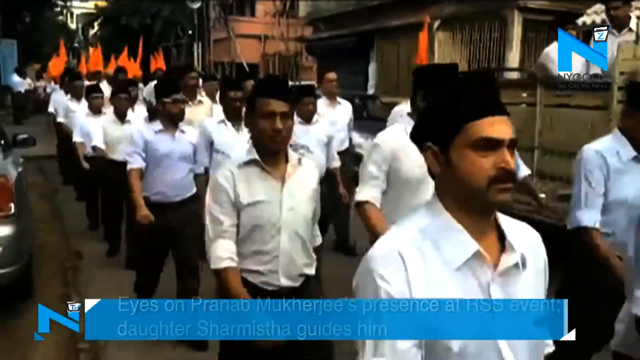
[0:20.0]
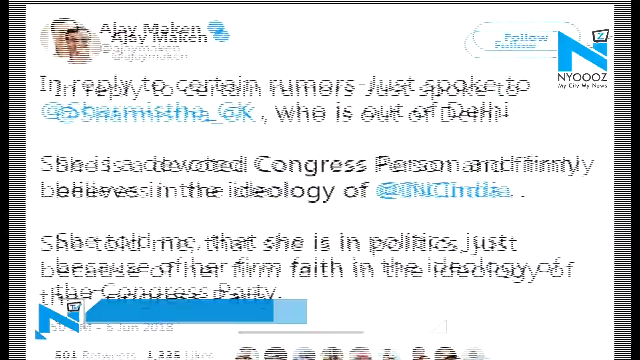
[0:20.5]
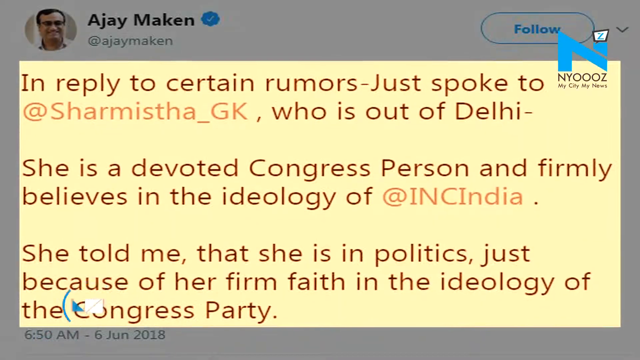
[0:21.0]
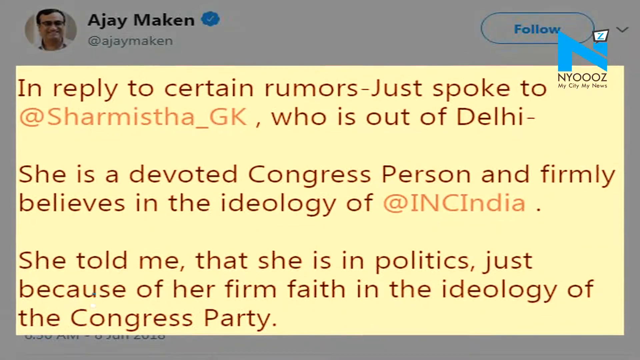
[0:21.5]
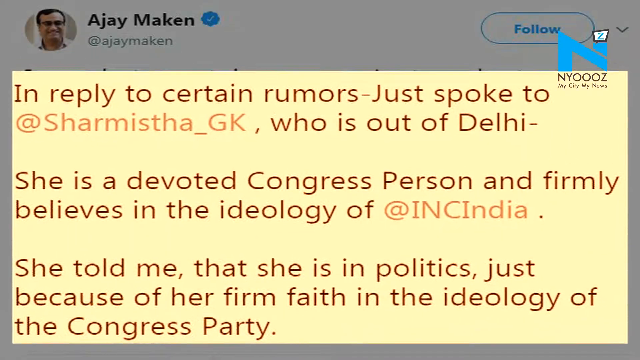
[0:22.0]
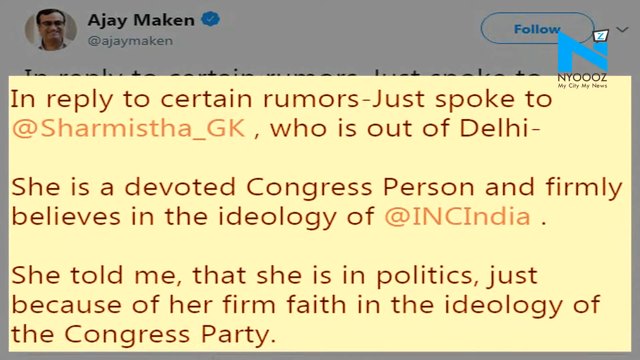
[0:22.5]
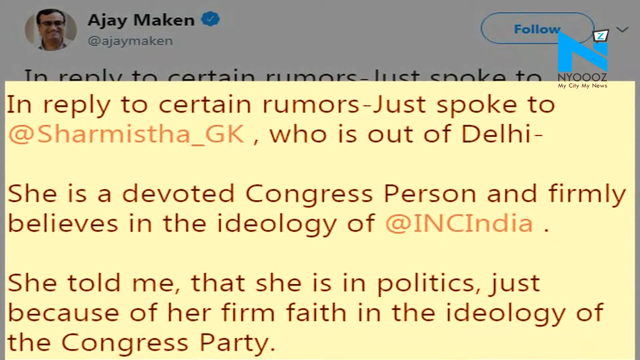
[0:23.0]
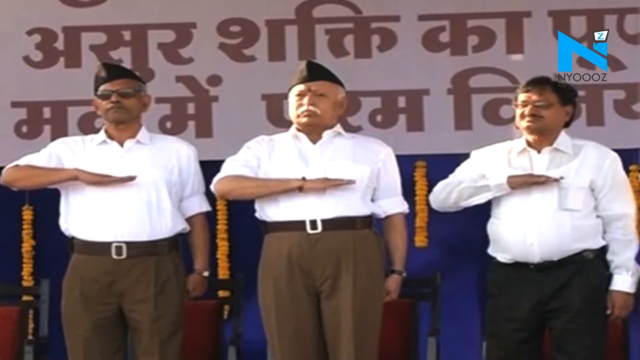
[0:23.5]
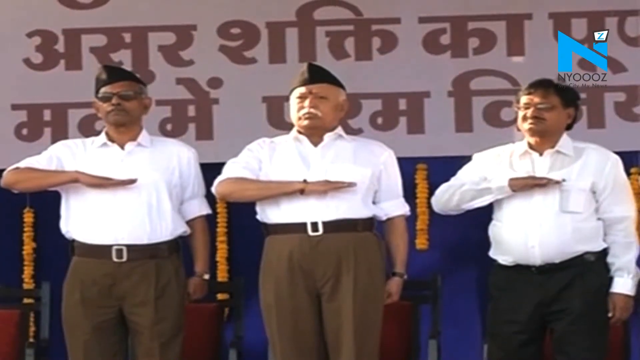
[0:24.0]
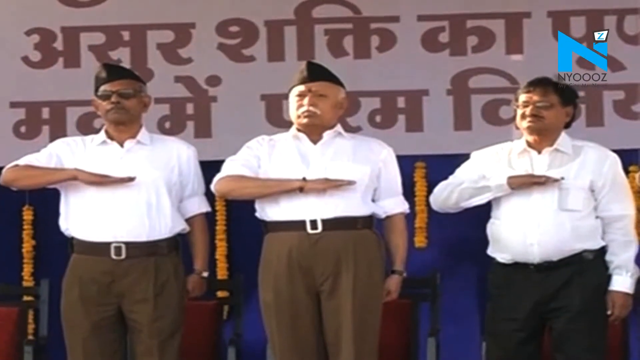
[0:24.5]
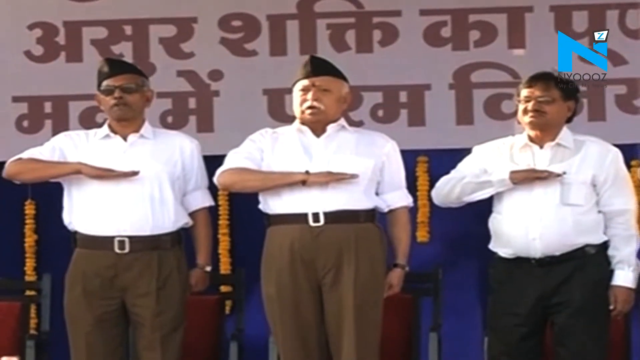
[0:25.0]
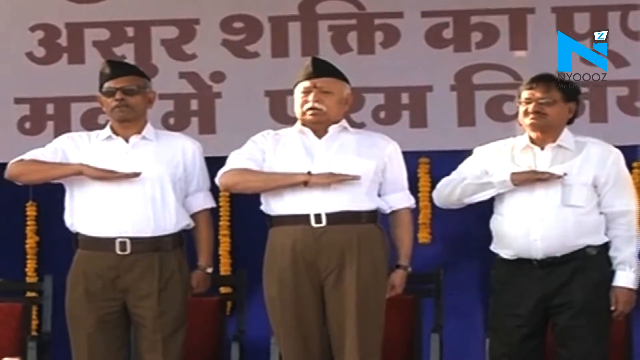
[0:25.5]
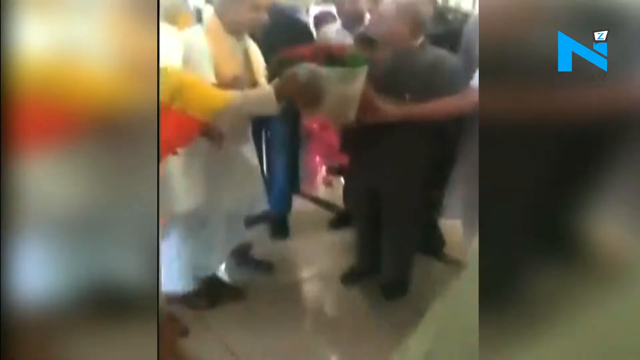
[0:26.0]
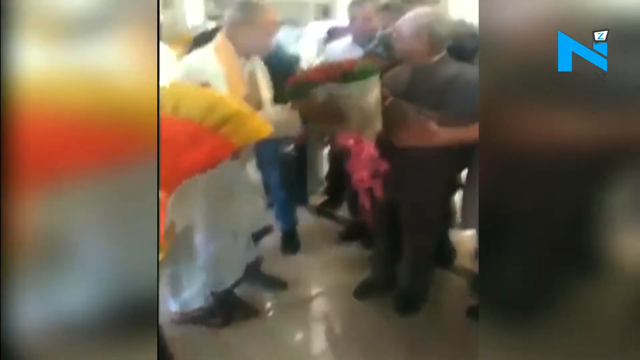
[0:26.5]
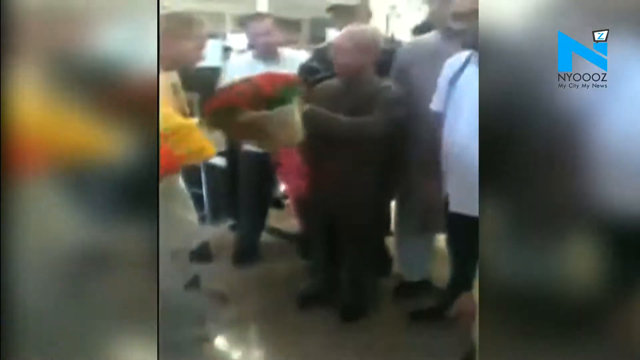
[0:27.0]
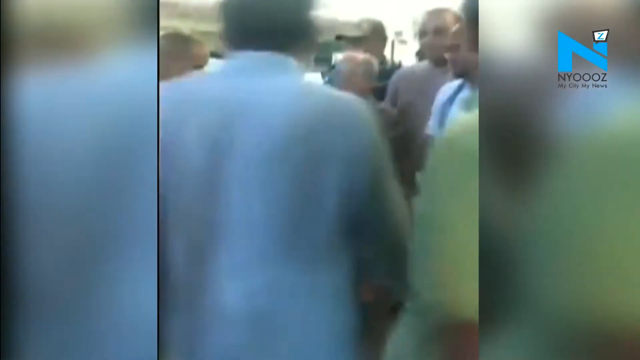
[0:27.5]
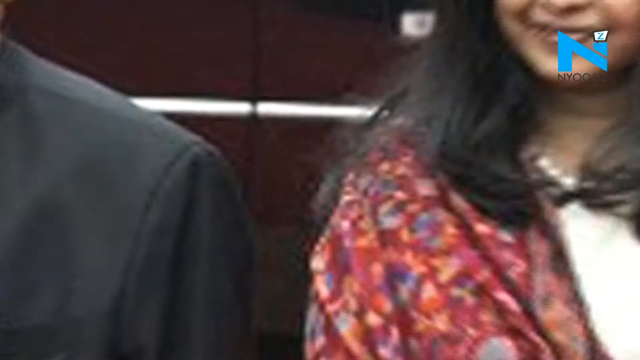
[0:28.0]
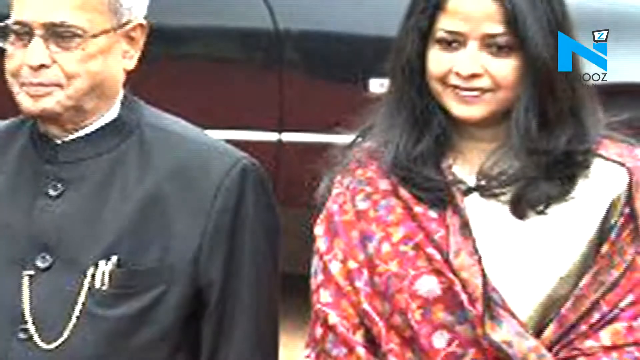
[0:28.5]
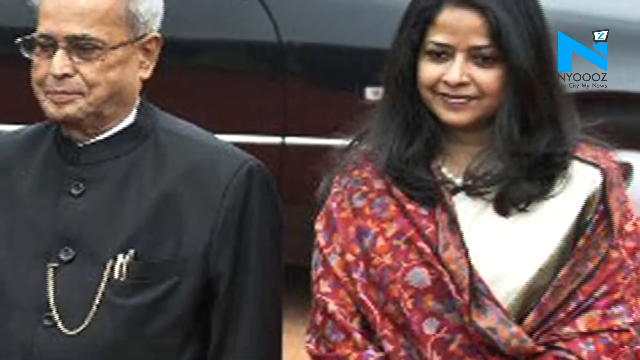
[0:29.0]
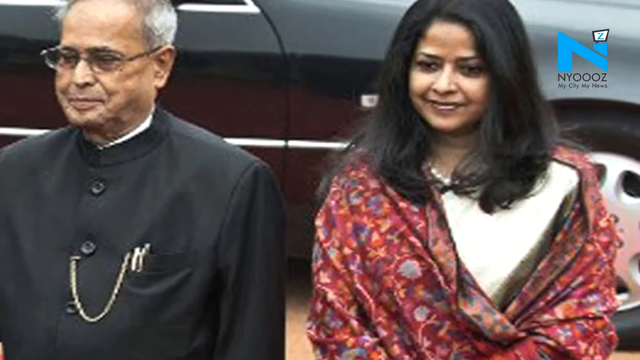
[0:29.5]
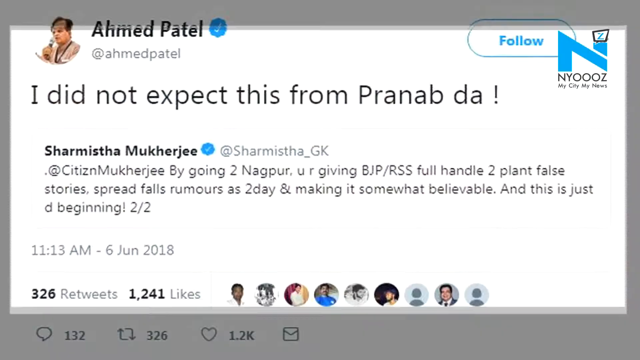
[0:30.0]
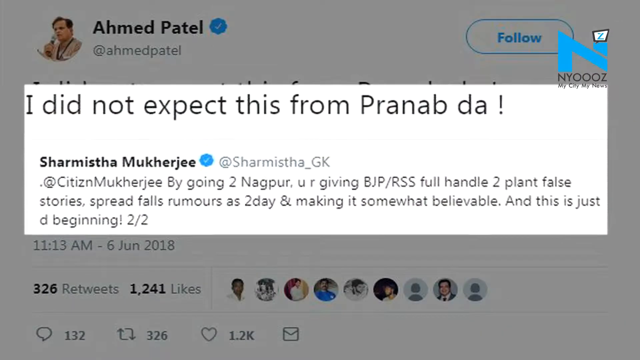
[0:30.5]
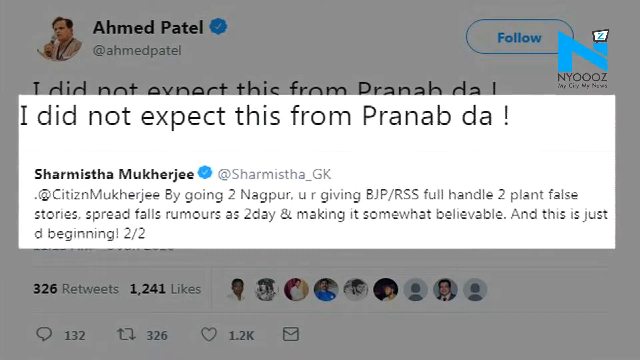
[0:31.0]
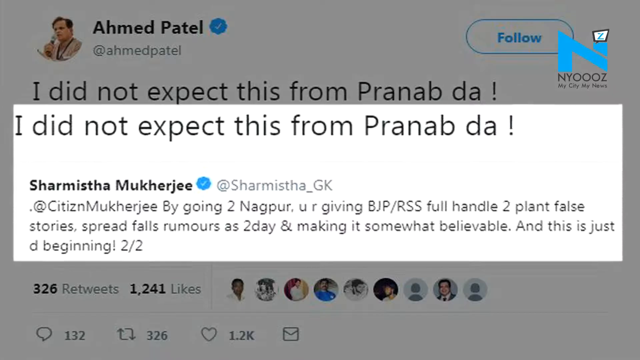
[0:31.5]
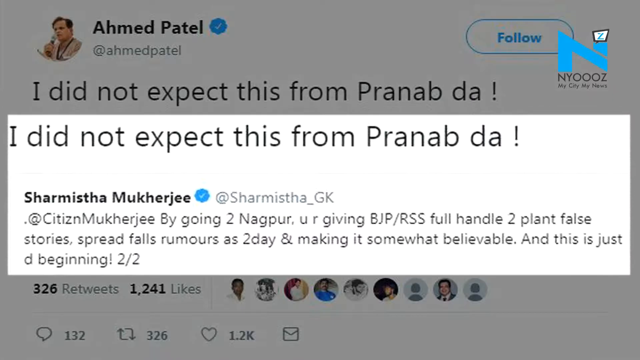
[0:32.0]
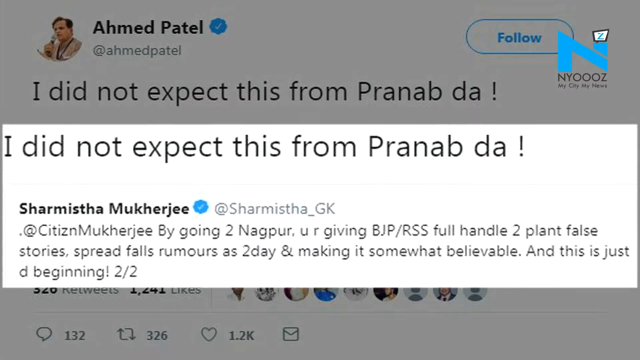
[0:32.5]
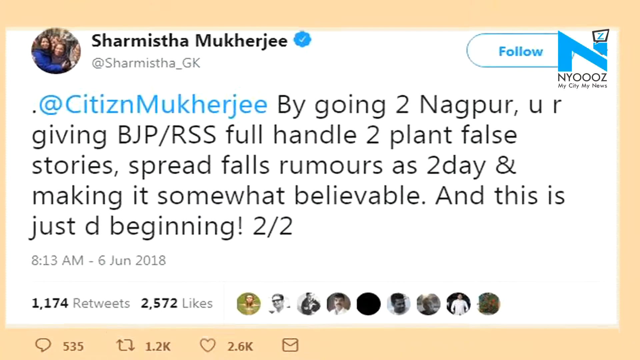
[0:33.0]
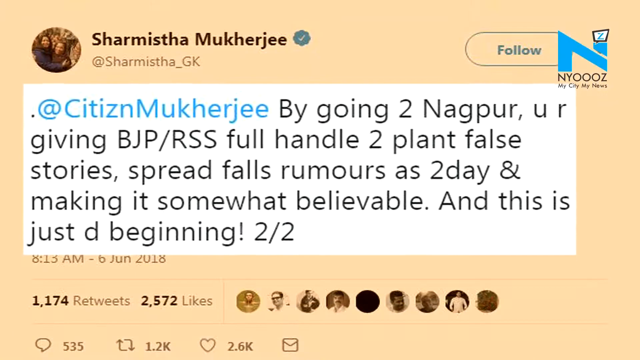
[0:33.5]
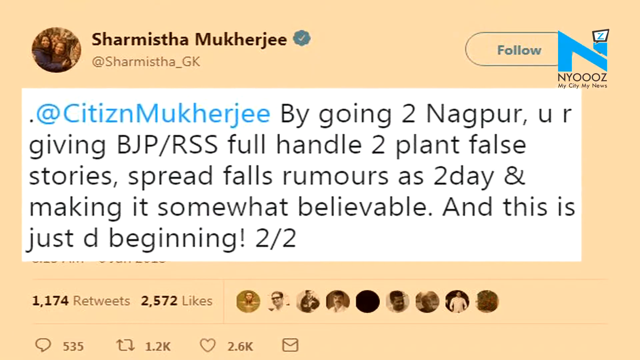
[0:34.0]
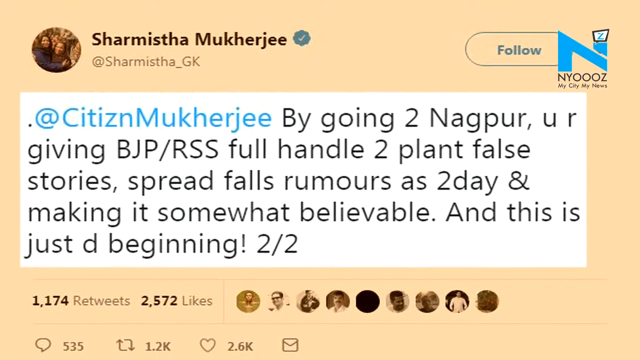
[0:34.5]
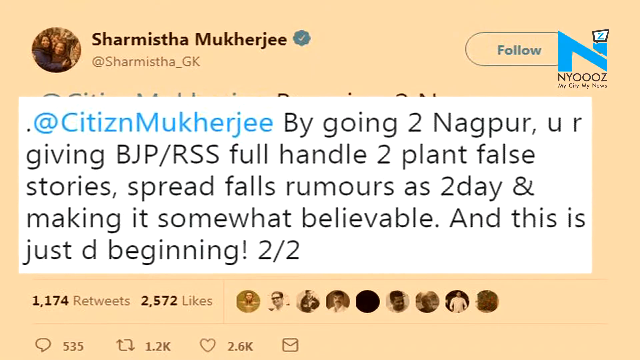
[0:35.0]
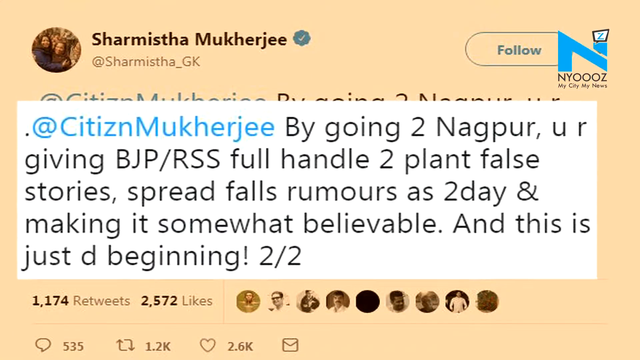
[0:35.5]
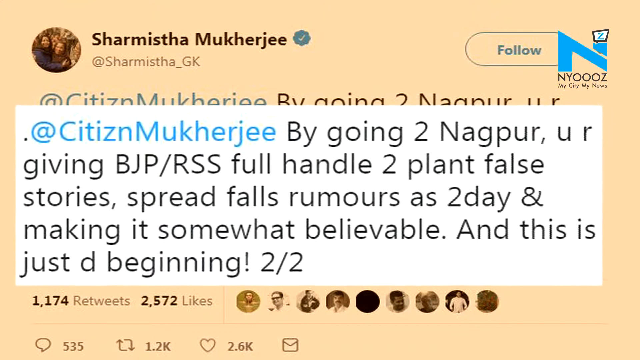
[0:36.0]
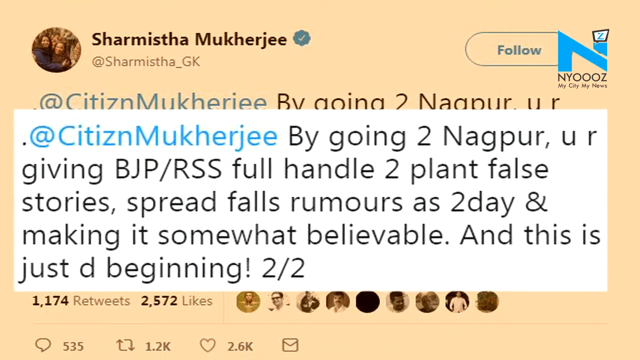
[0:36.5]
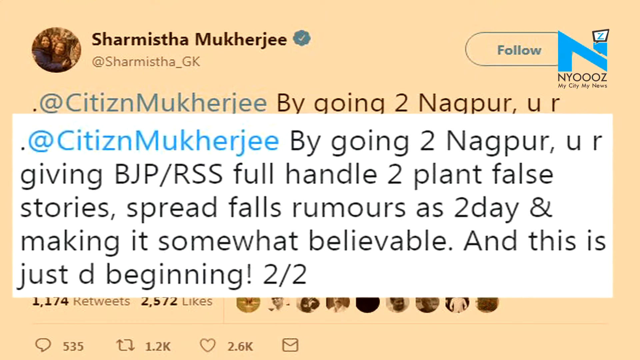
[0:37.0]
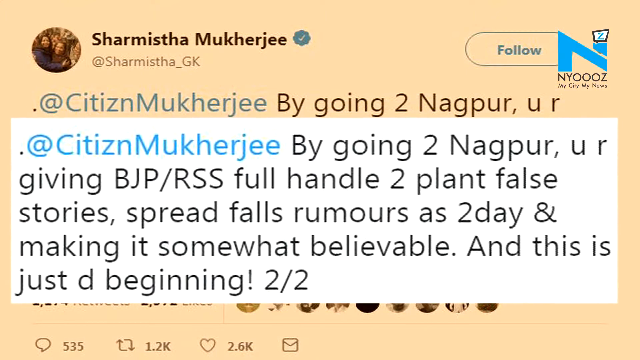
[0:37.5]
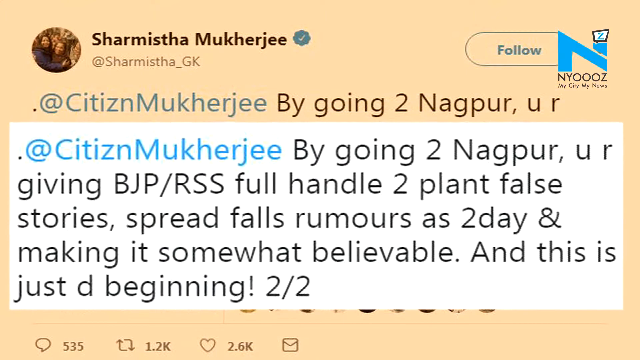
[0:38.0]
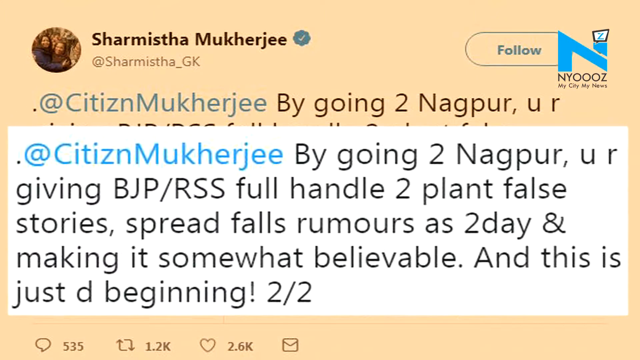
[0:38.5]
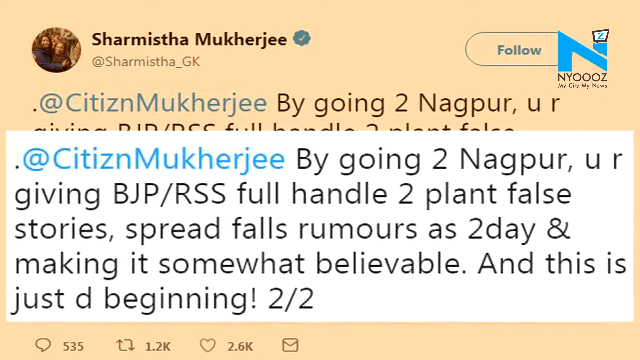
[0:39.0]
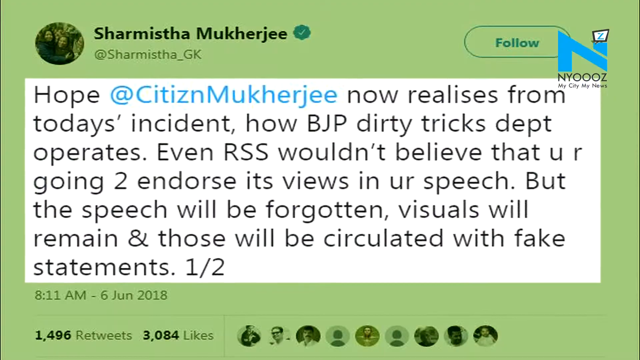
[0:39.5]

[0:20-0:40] A large group of men wears white shirts, black trousers and black hats; some hold orange flags attached to poles and some carry batons. A tweet by A.J. Maken appears: "In reply to certain rumors-Just spoke to @Sharmistha_GK, who is out of Delhi-" followed by "She is a devoted Congress Person and firmly believes in the ideology of @INCIndia. She told me, that she is in politics, just because of her firm faith in the ideology of". Three elderly men stand next to each other; two wear black hats, white shirts and brown trousers, and one wears a white shirt and black trousers. A man and a woman stand together; the woman wears a traditional Indian dress and the man wears a suit. A tweet by Ahmed Patel appears, quote-tweeting a tweet by Sharmishta Mukherjee, reading "I did not expect this from Pranab da !" The quoted tweet from Sharmistha Mukherjee @Sharmistha_GK reads "@CitiznMukherjee By going 2 Nagpur, u r giving BJP/RSS full handle 2 plant false stories, spread false rumours as 2day & making it somewhat believable. And this is just d beginning! 2/2". Another tweet by Sharmistha follows: "Hope @CitiznMukherjee now realises from todays' incident, how BJP dirty tricks dept operates. Even RSS wouldn't believe that u r going 2 endorse its views in ur speech. But the speech will be forgotten, visuals will remain & those will be circulated with fake statements. 1/2"